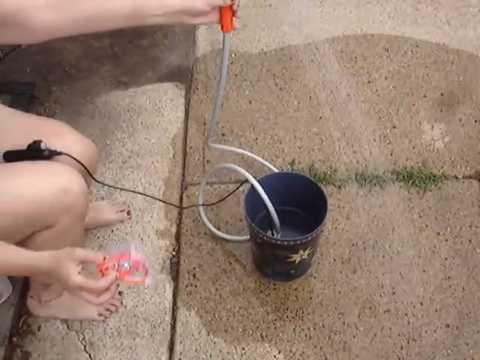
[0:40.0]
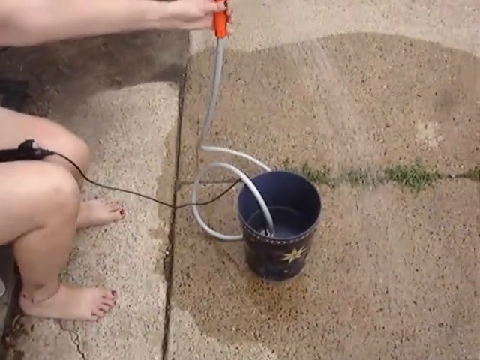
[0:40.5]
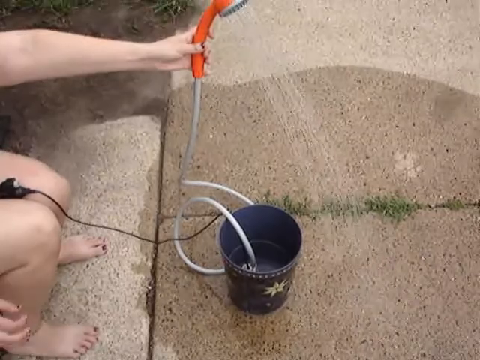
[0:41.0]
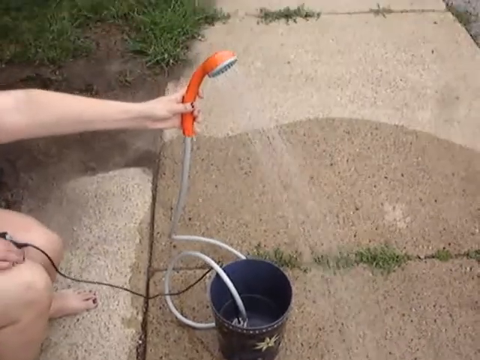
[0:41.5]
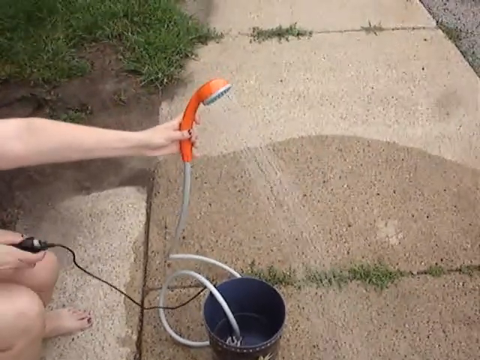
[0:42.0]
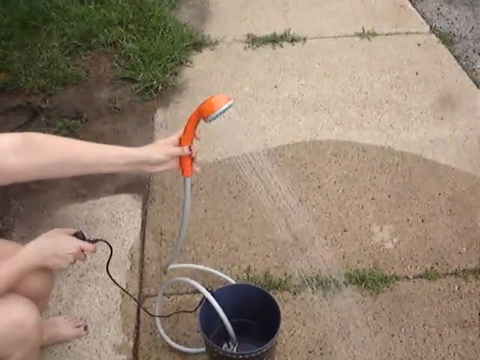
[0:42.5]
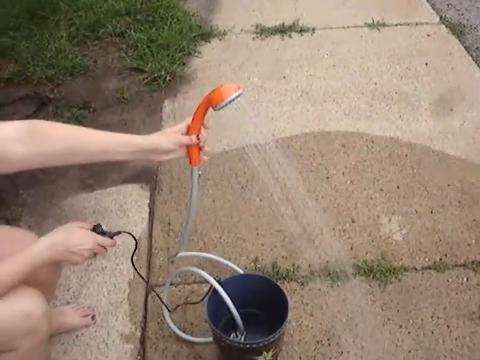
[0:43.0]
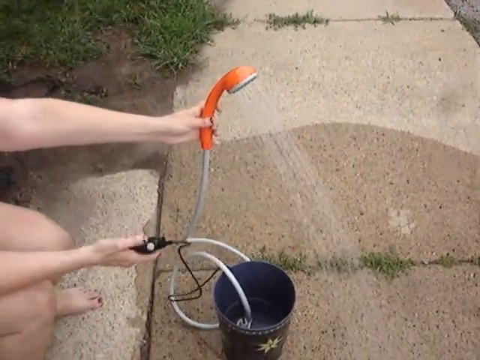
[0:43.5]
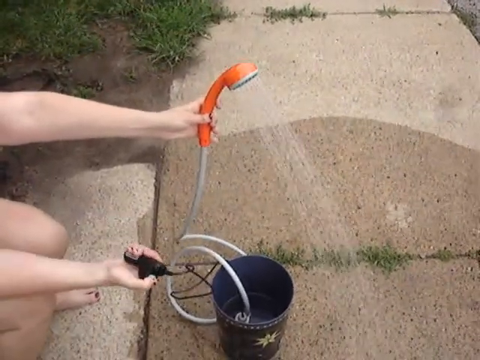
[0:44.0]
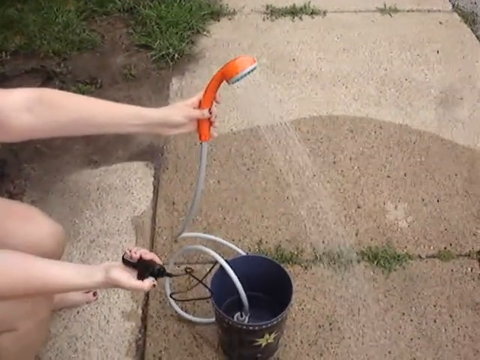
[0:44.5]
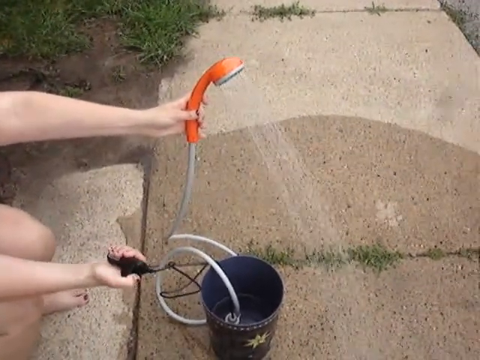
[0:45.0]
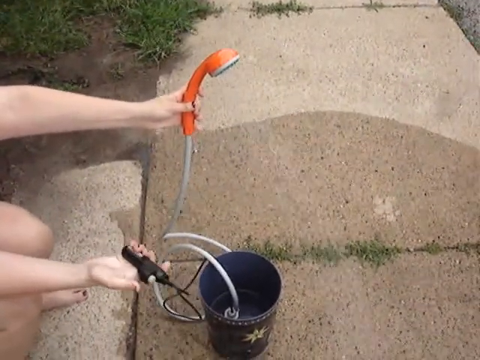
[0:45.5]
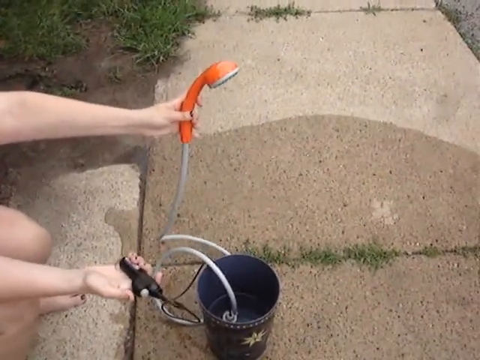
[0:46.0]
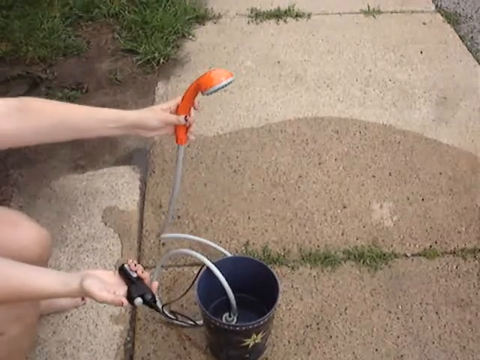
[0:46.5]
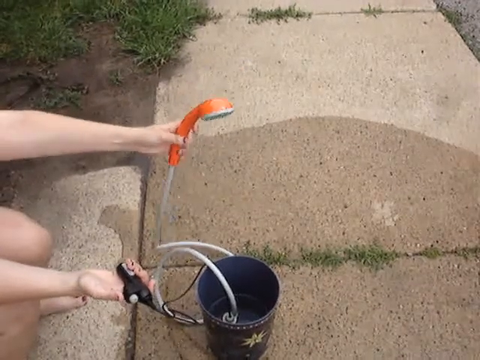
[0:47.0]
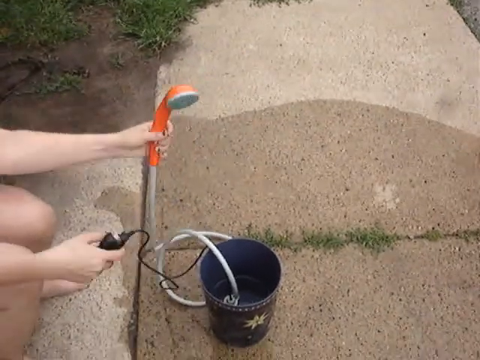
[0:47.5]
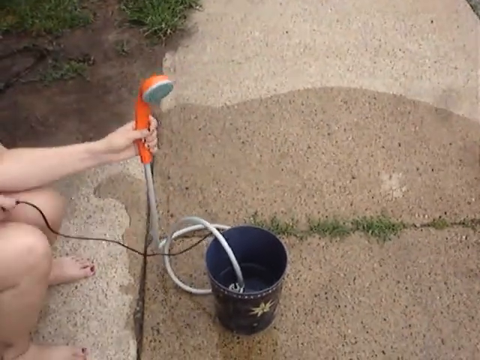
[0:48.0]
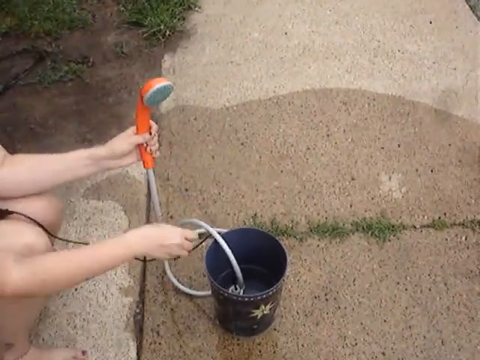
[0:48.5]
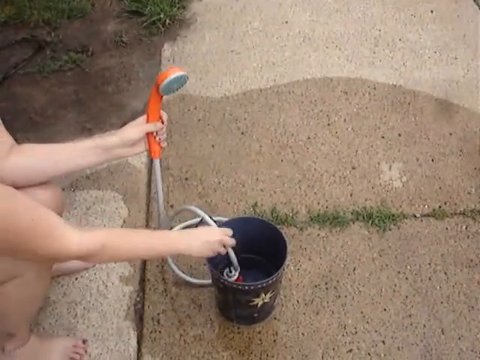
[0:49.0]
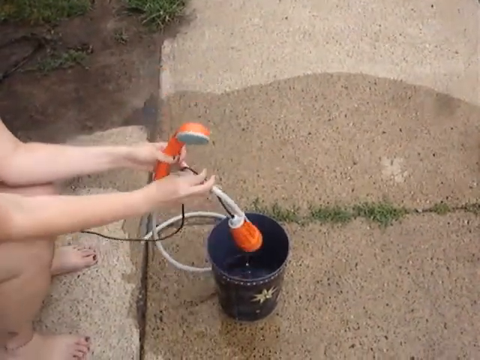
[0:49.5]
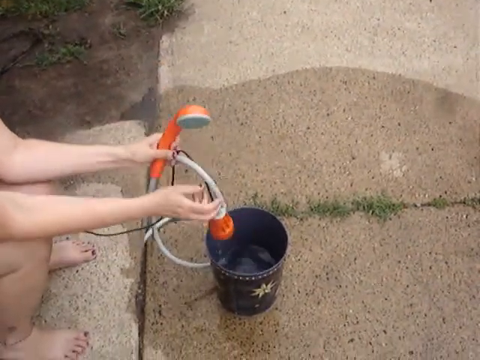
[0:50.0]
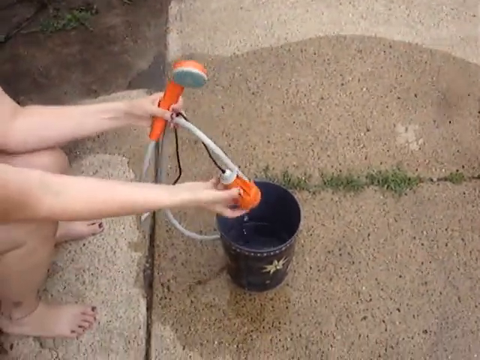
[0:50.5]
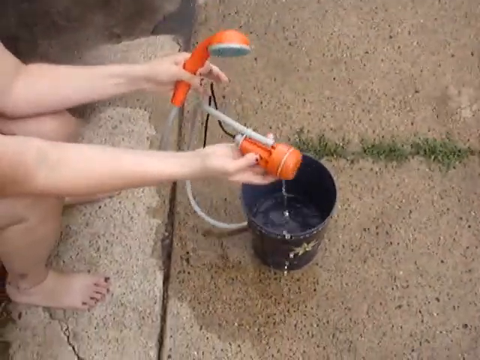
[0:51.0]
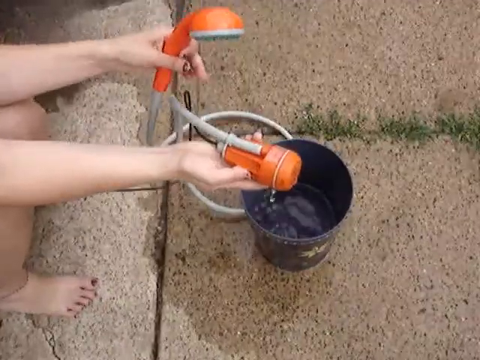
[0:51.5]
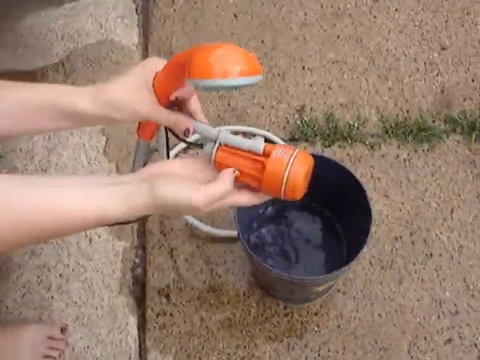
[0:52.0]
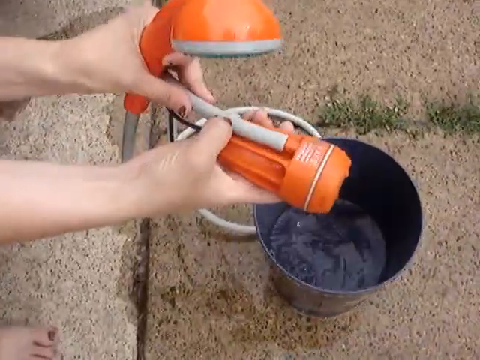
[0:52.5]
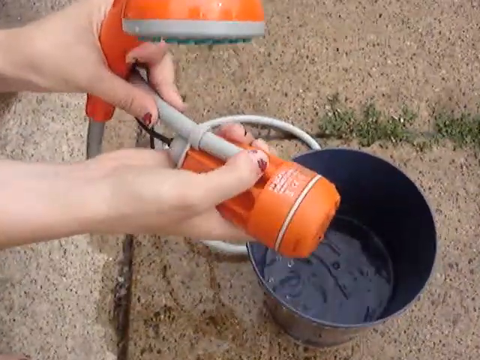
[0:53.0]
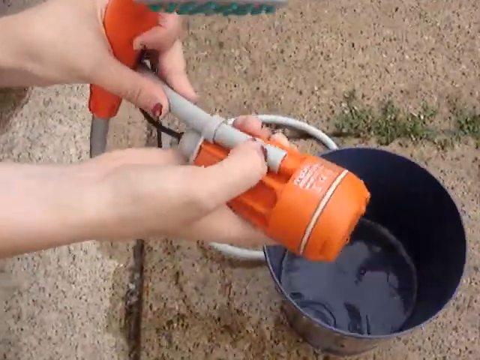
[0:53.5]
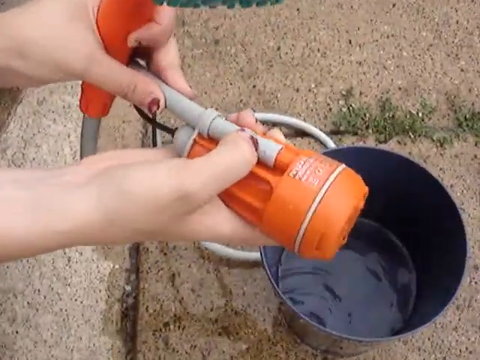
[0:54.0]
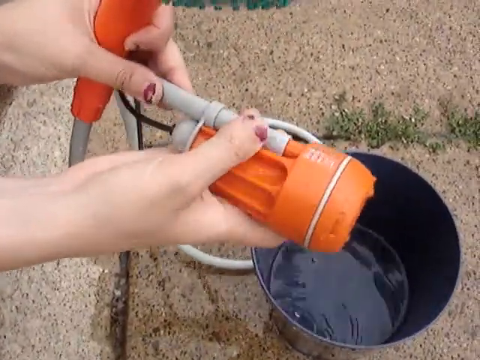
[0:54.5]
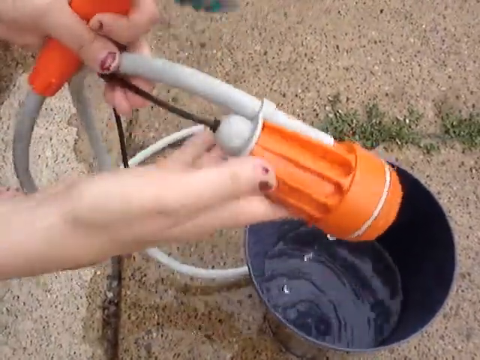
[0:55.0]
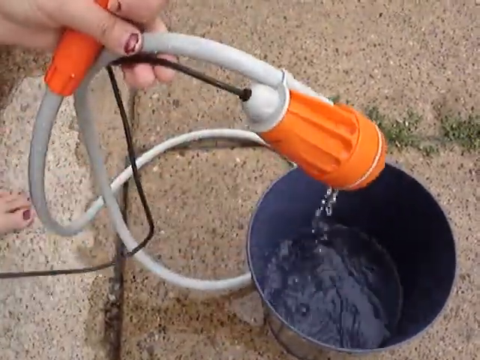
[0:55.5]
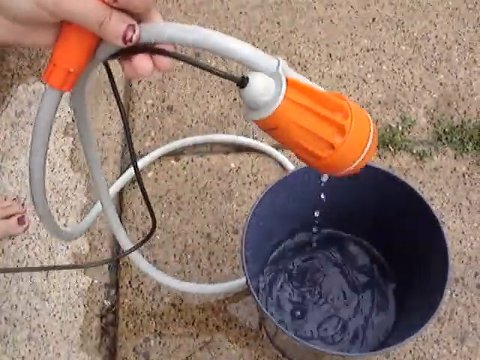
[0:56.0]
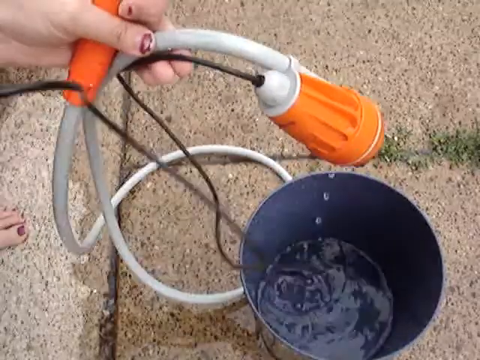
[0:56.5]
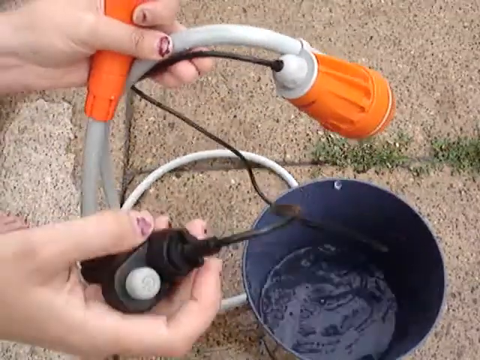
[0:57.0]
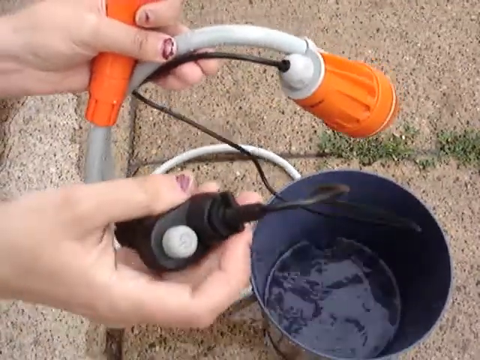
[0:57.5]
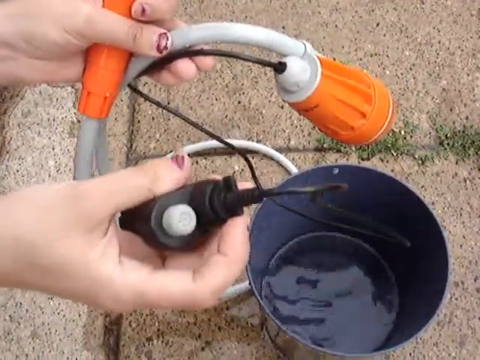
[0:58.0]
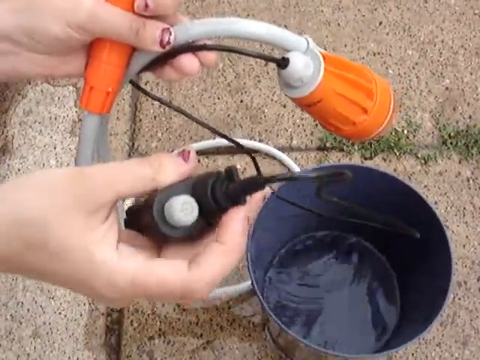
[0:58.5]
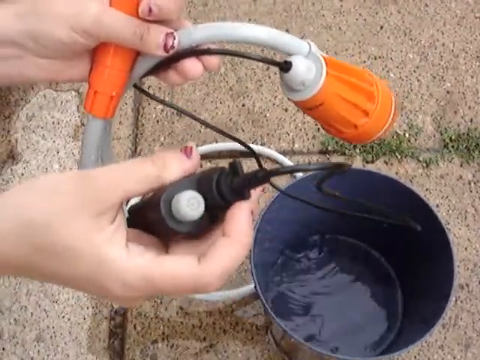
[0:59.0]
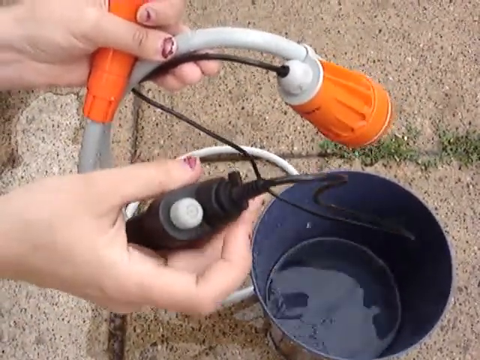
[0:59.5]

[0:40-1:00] The person places the transparent packet down and retrieves the black remote from their lap. The shower head is still spraying water onto the pavement from the bucket, where the inlet pipe and the wire for the water pump are submerged in the water. Water collects on the pavement and starts running down toward the person's feet, suggesting the water is leaving the bucket at a rapid rate. The person then lifts the contraption powering the shower head out of the bucket, revealing an orange plastic water pump with a black wire coming out of it and the inlet pipe going into it. It is apparently powered by batteries, since no additional wires come out of it. The camera zooms in on the contraption as the person demonstrates the shape of the remote and the look of the water pump.